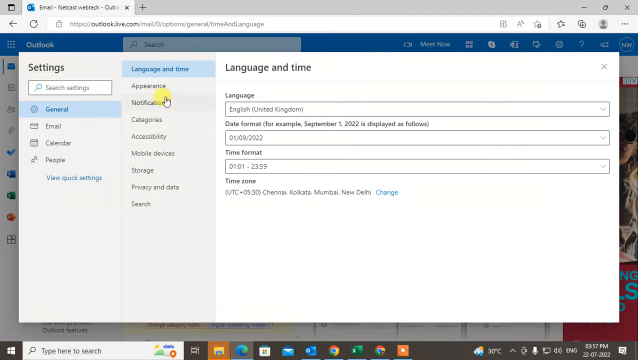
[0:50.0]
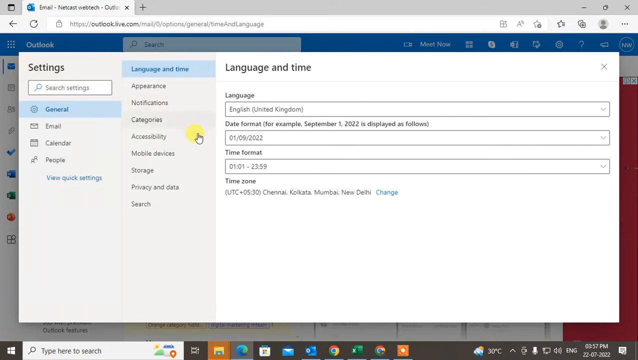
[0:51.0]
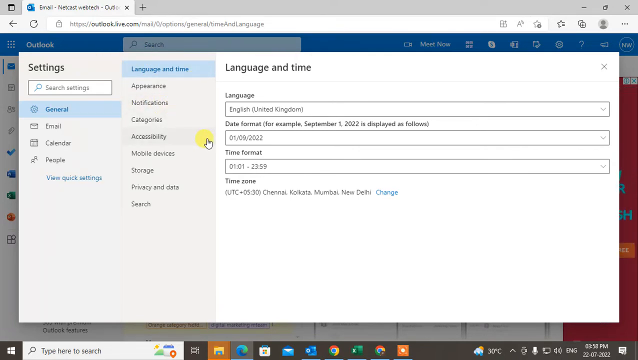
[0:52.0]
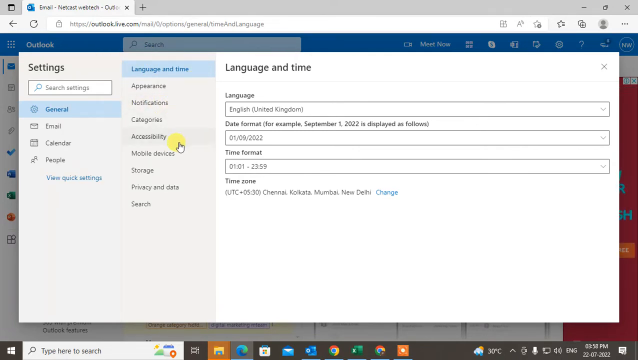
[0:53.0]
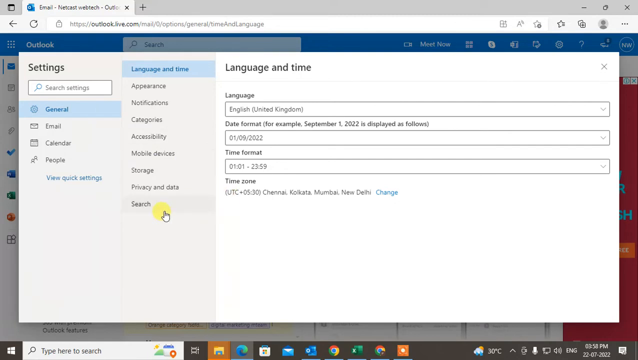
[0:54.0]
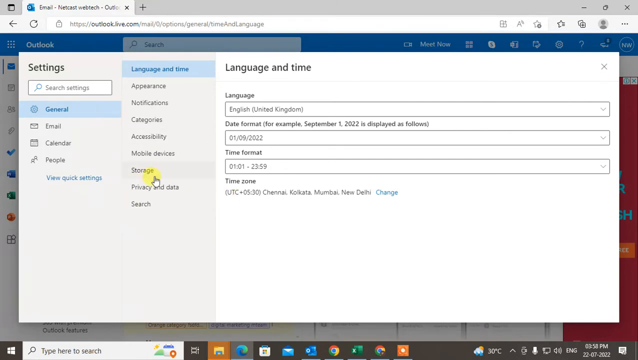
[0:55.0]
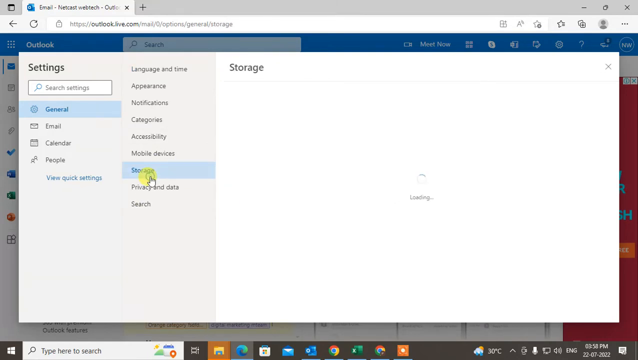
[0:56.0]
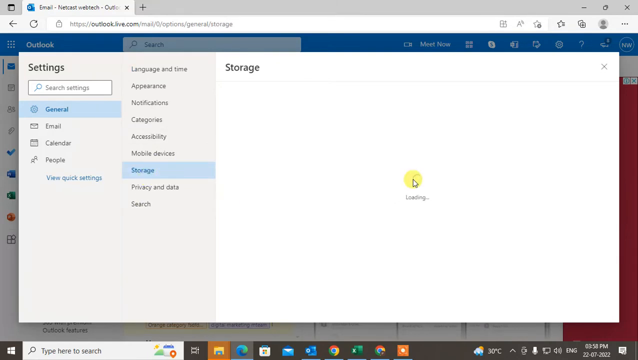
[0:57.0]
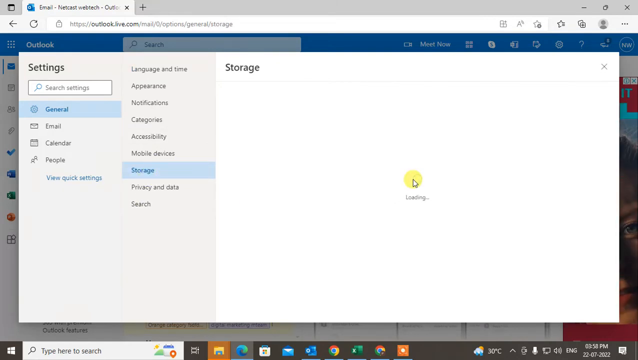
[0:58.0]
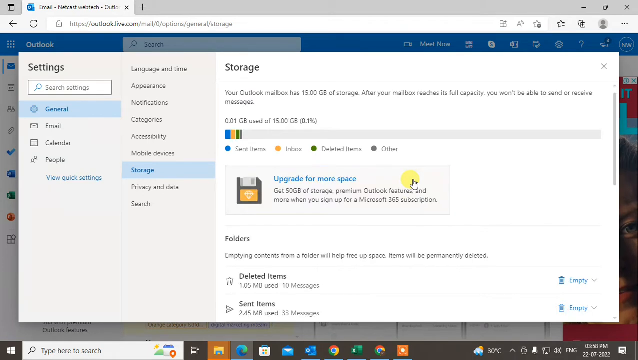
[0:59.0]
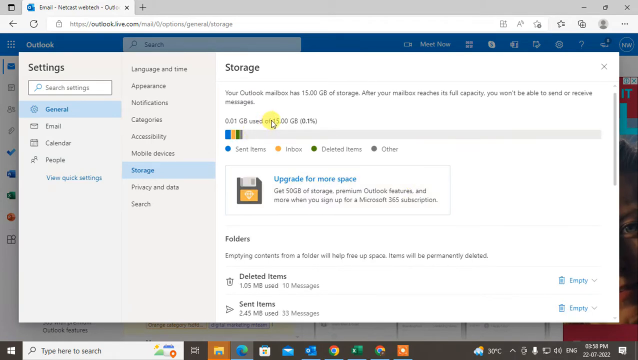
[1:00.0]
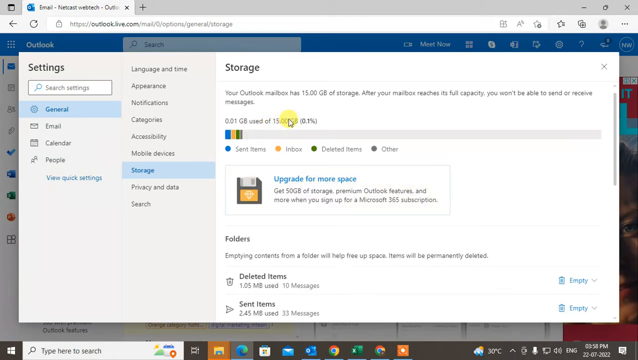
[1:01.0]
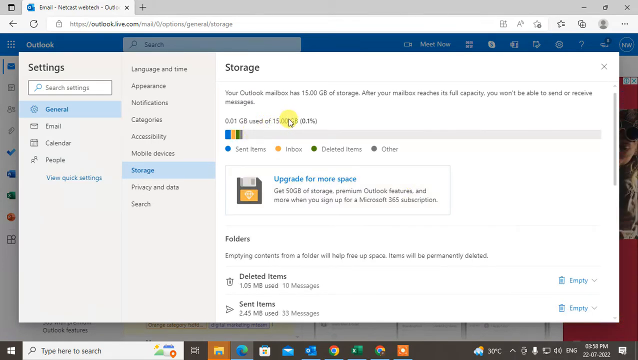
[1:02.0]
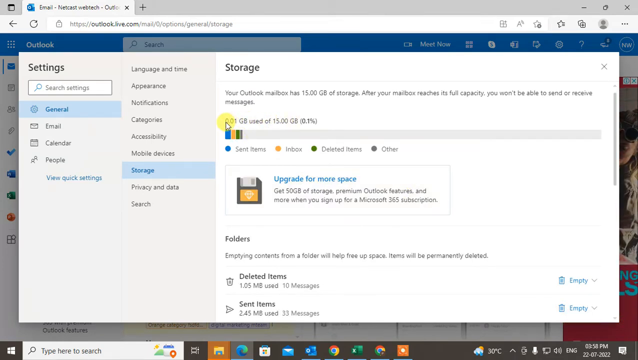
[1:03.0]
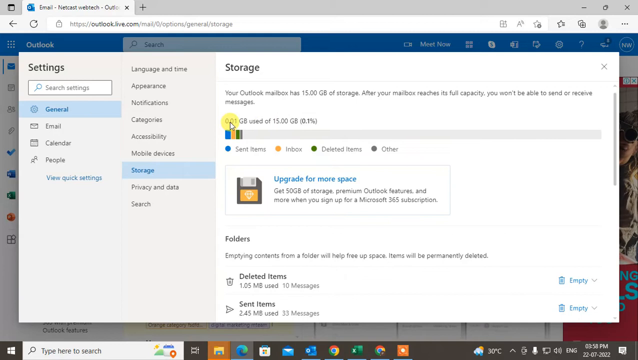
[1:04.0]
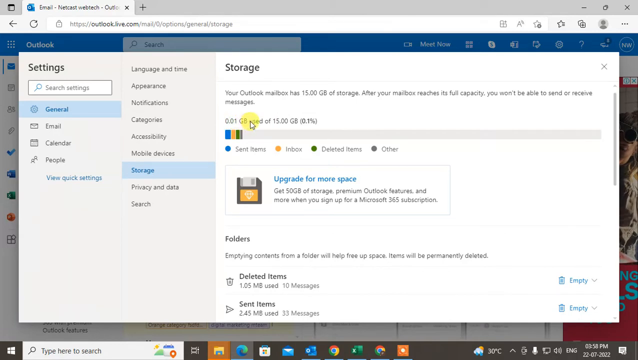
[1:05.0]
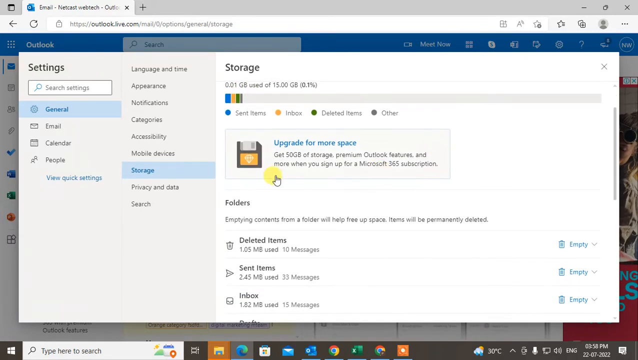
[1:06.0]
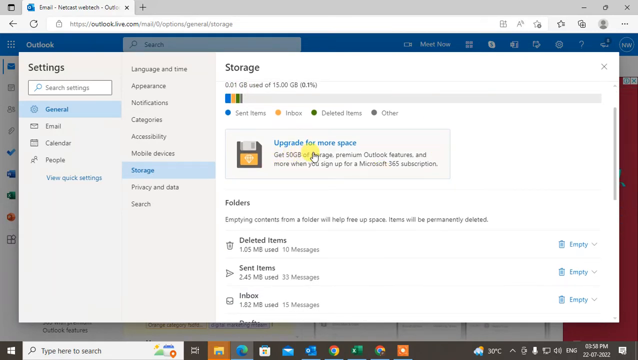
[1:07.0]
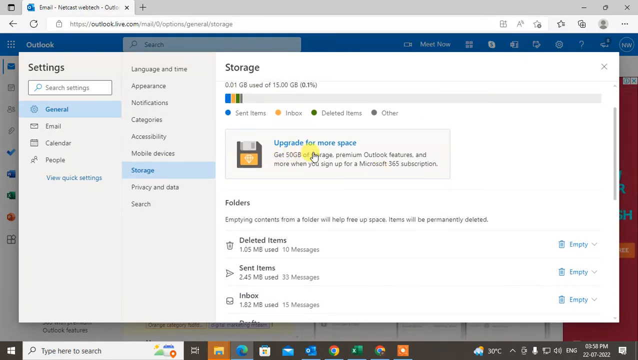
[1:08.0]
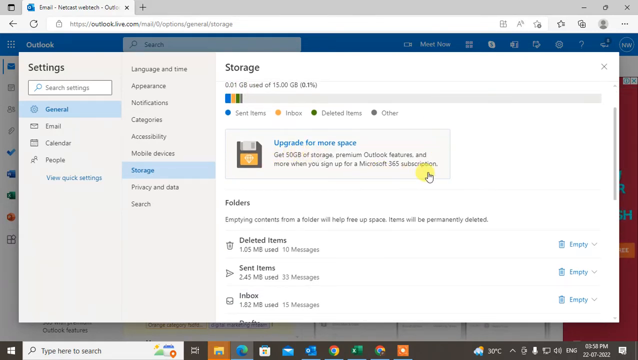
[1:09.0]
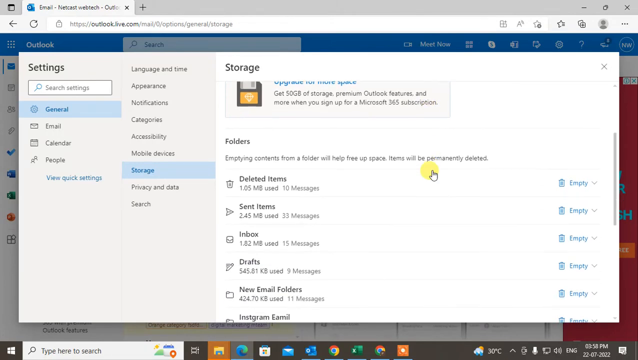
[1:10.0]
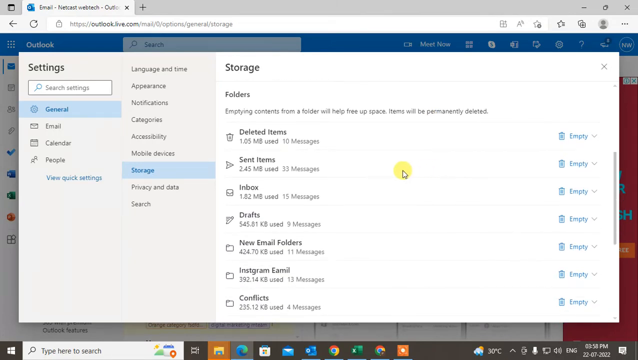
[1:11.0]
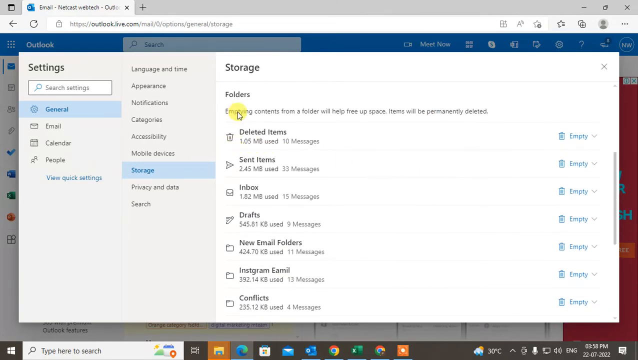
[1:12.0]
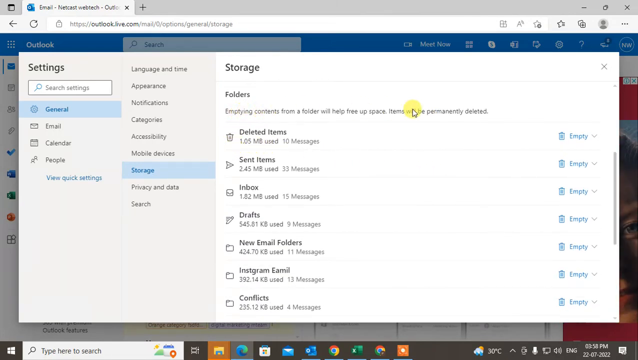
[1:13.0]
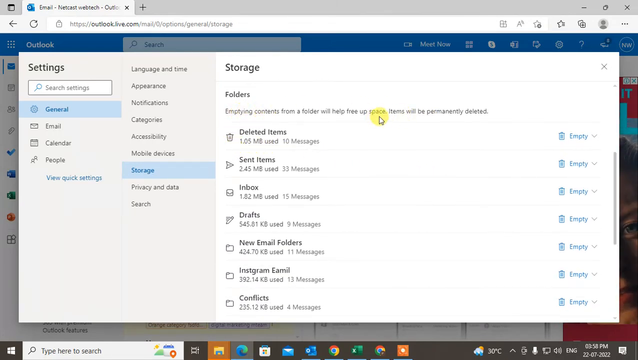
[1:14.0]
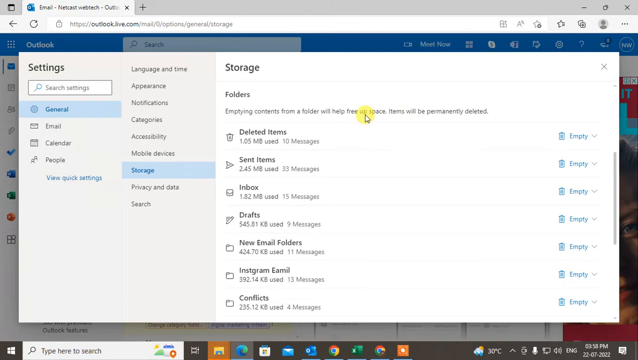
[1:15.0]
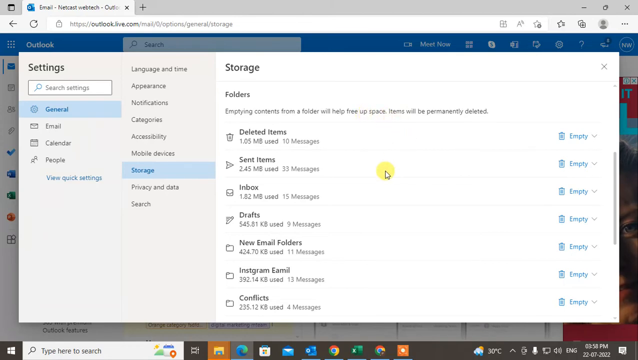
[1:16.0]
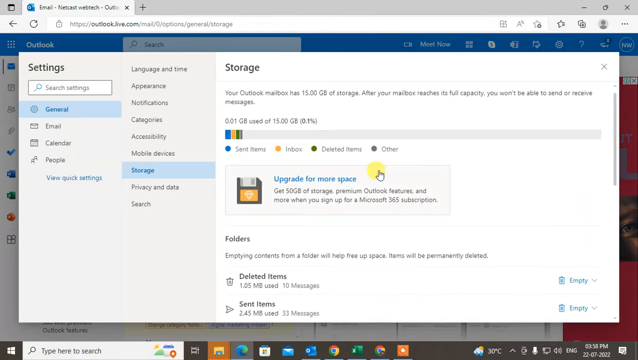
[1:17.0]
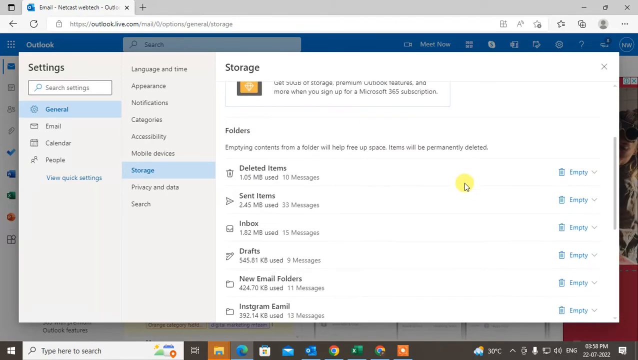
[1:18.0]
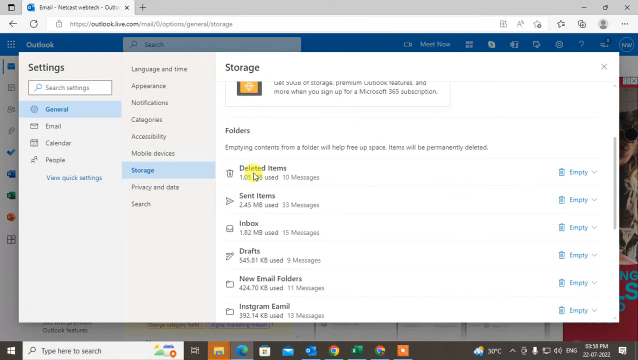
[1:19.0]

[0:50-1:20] In the General tab, Language and Time is shown. Storage is clicked, and the Storage page populates, showing what is being used. The cursor highlights over the gigabits used and gigabits available. It moves through an option to update for more storage, then through the folders section to help free up space. The folders are scrolled down and the deleted items are highlighted. Then Accessibility is opened, followed by a return to Storage, apparently repeating the steps to get back to the Storage window. The demonstration shows how to free up storage in the email program by emptying the deleted messages. On the right side of the screen, each folder has a little trash can icon with the word "empty." The mouse hovers over "empty" to show how to get rid of the deleted emails that still take up space.